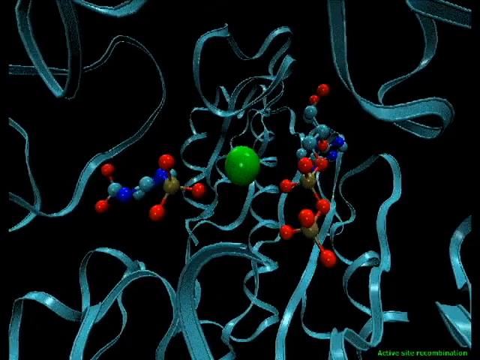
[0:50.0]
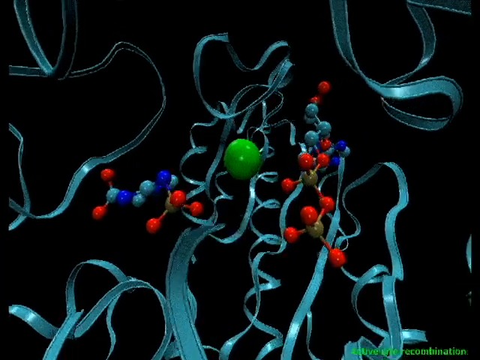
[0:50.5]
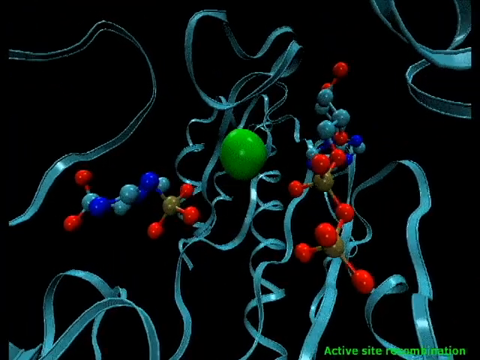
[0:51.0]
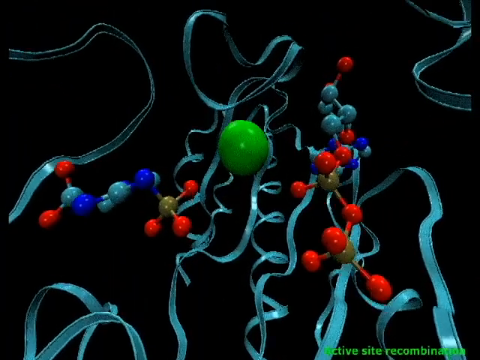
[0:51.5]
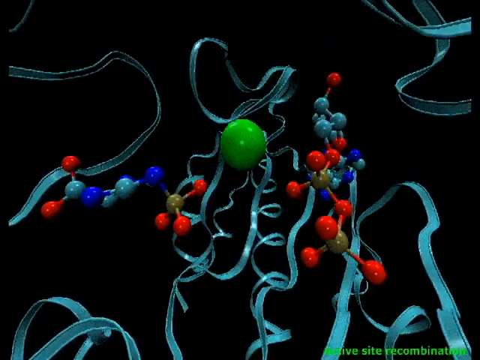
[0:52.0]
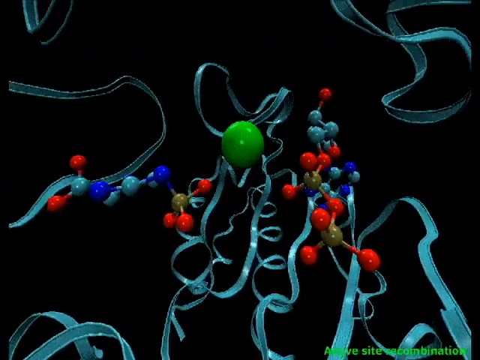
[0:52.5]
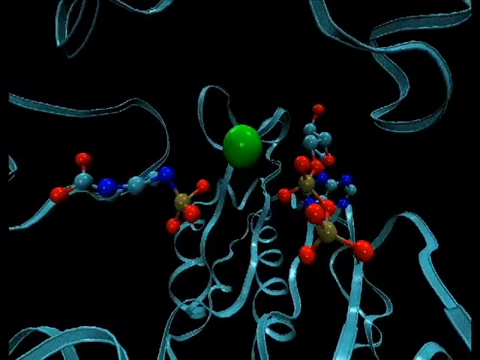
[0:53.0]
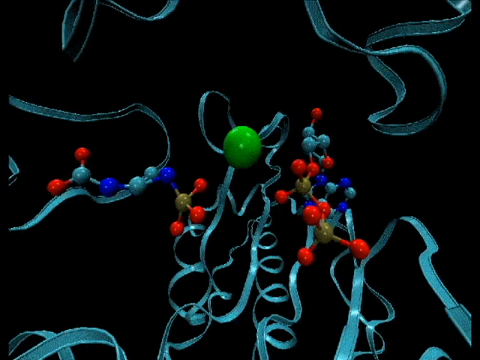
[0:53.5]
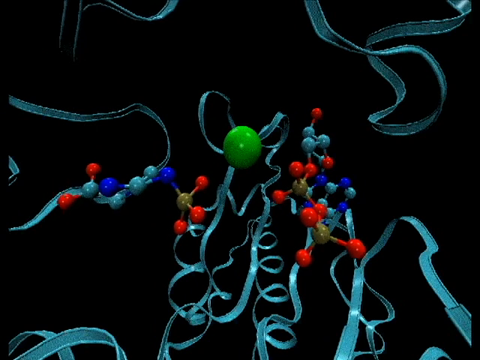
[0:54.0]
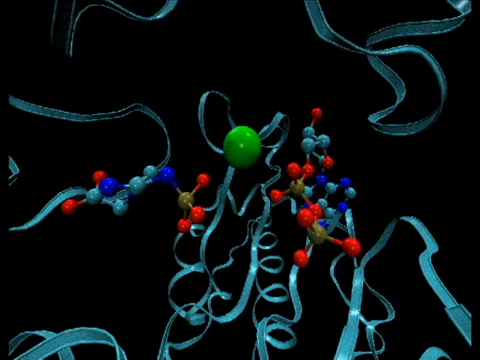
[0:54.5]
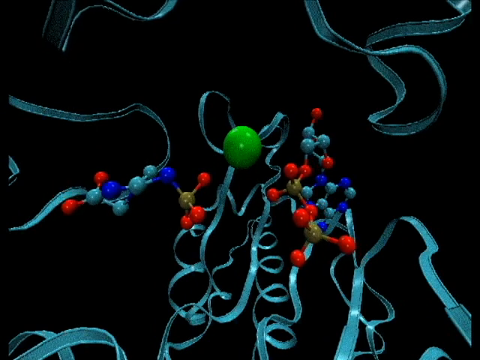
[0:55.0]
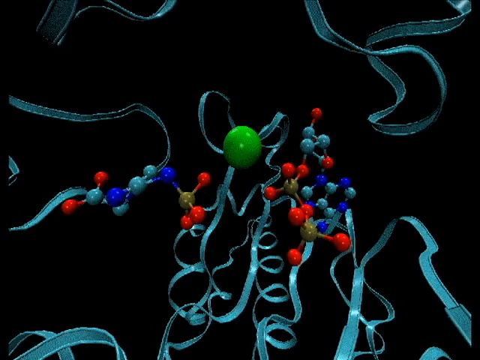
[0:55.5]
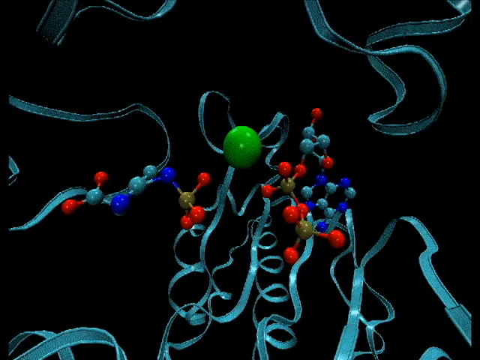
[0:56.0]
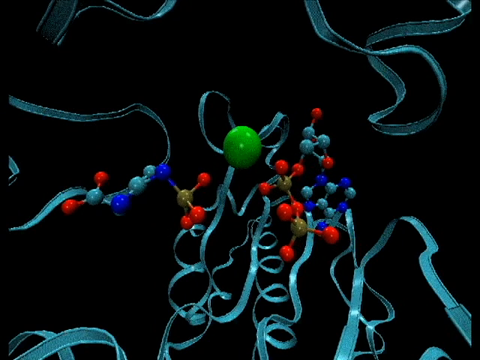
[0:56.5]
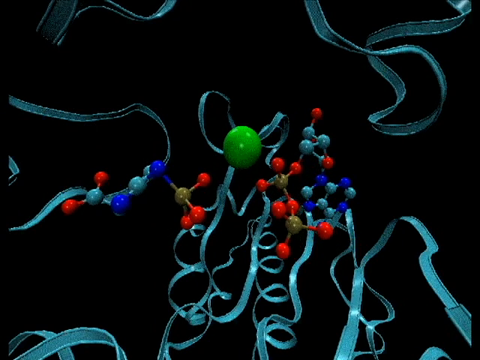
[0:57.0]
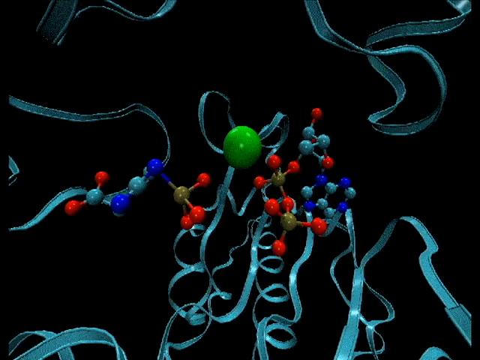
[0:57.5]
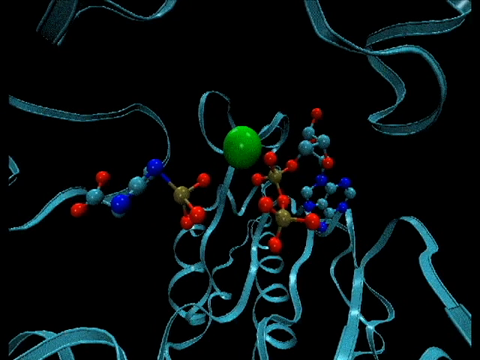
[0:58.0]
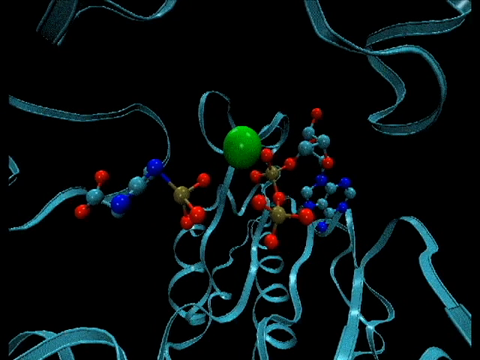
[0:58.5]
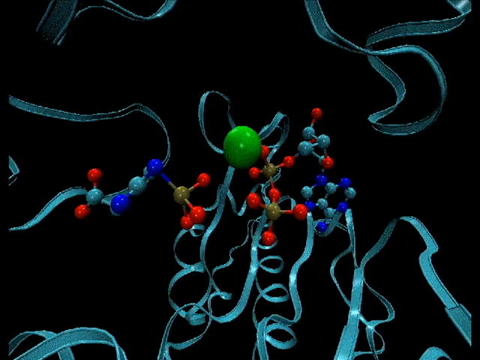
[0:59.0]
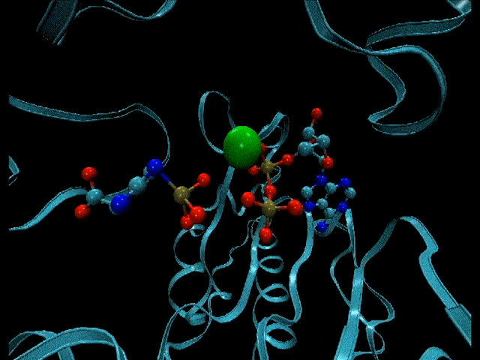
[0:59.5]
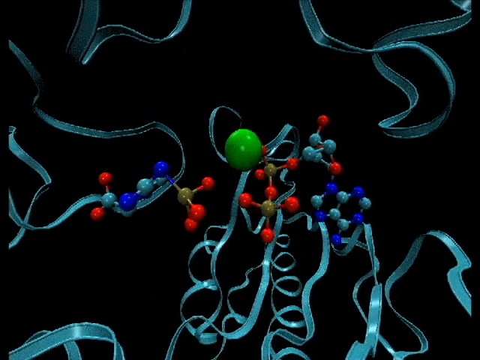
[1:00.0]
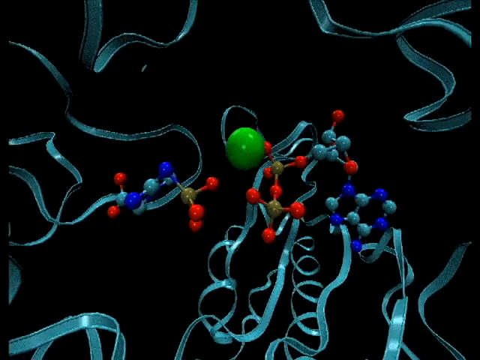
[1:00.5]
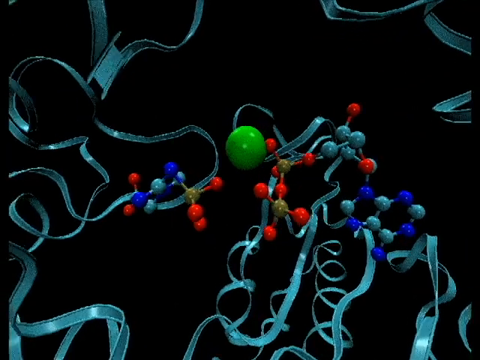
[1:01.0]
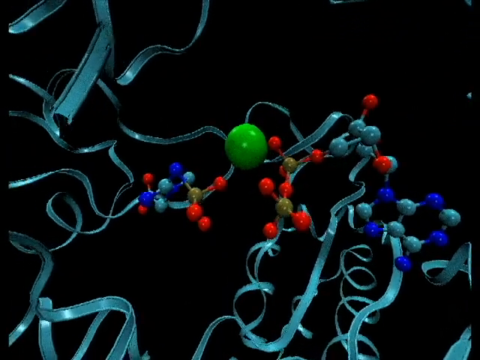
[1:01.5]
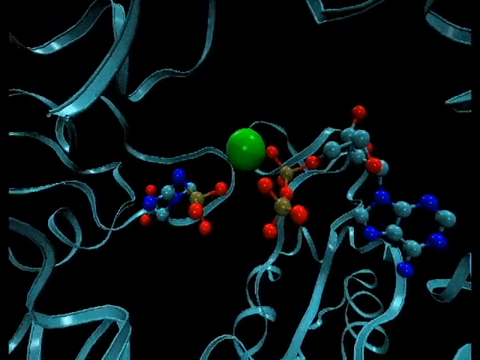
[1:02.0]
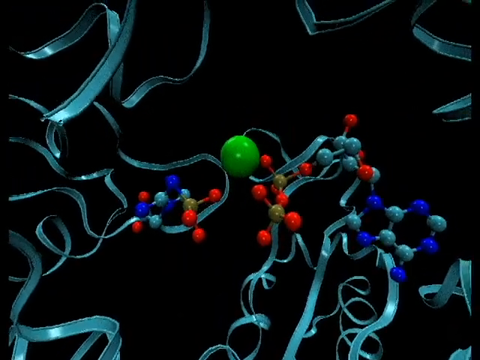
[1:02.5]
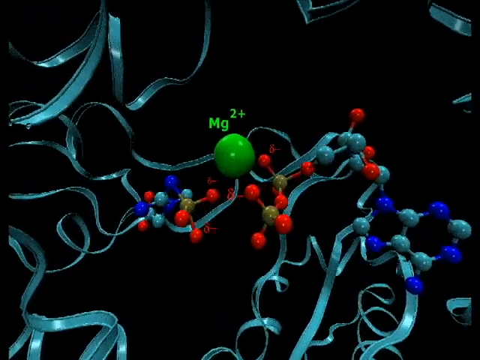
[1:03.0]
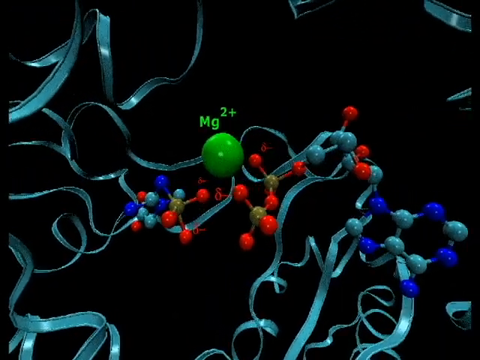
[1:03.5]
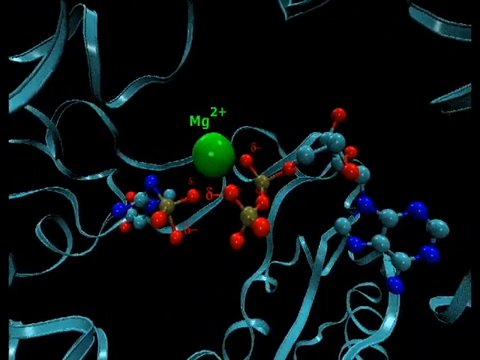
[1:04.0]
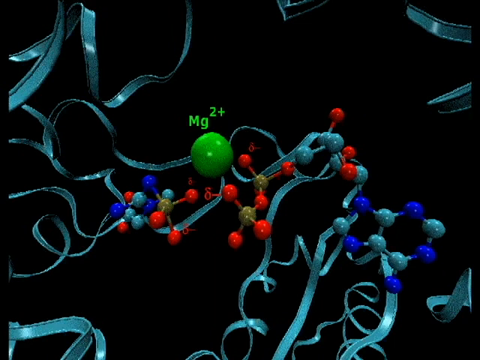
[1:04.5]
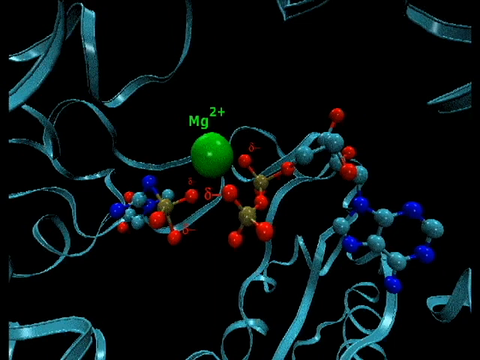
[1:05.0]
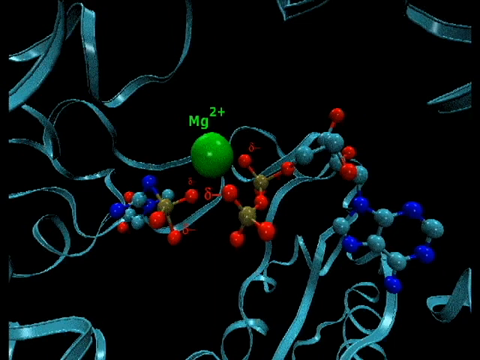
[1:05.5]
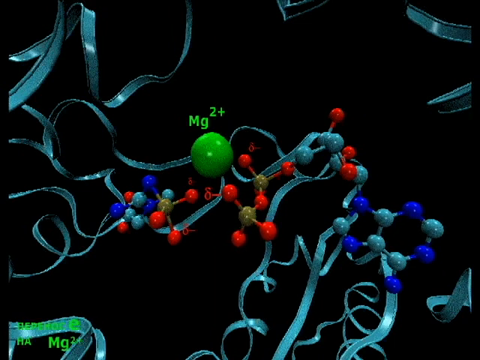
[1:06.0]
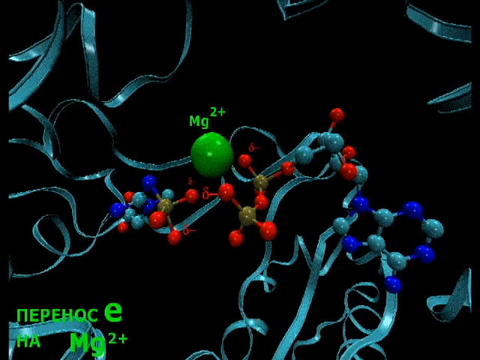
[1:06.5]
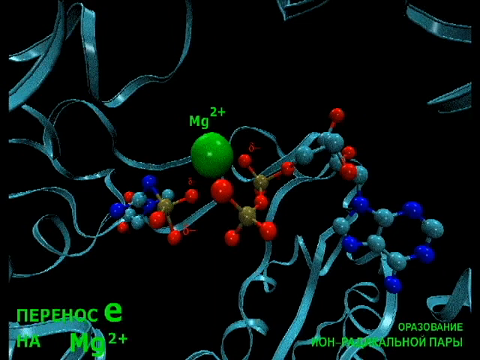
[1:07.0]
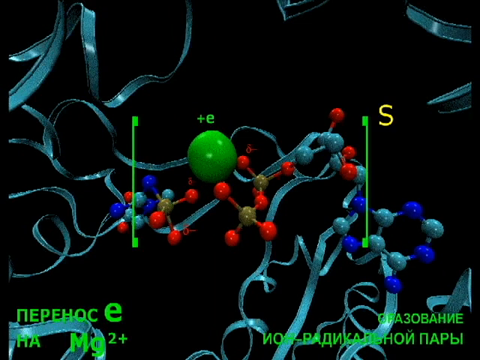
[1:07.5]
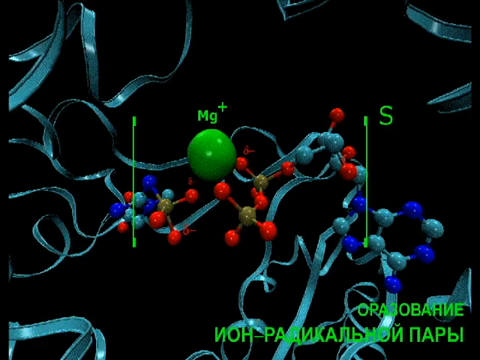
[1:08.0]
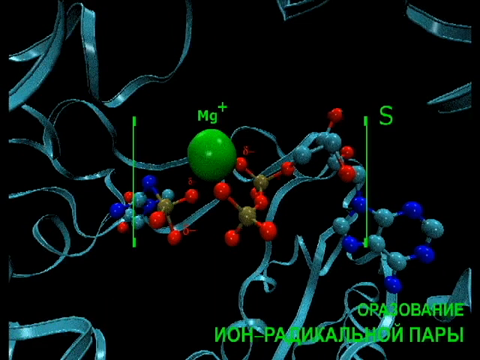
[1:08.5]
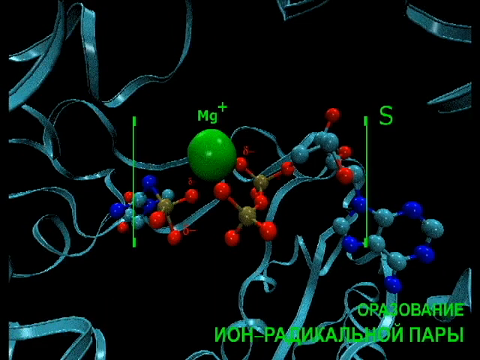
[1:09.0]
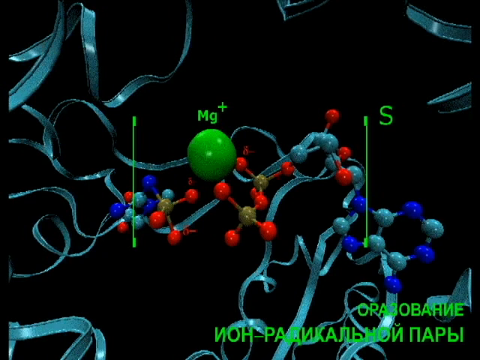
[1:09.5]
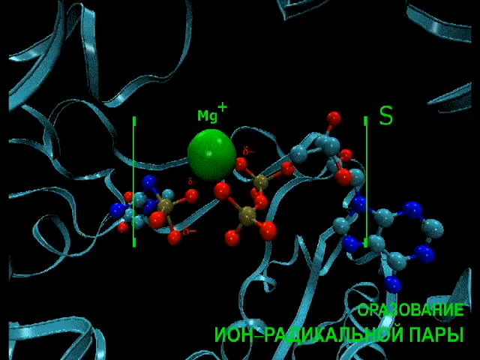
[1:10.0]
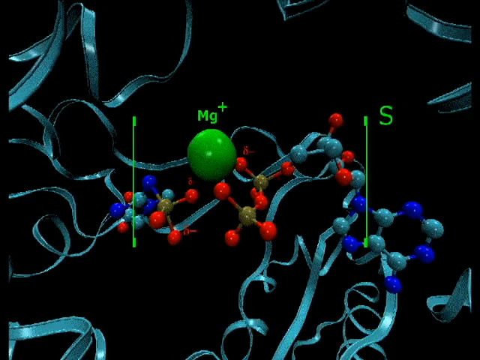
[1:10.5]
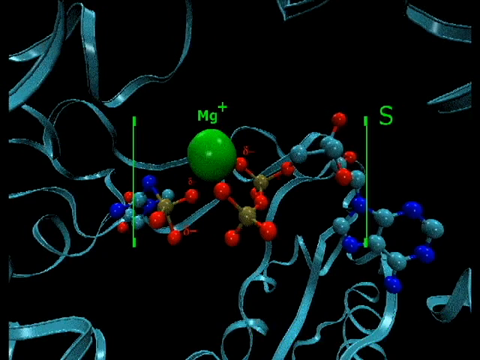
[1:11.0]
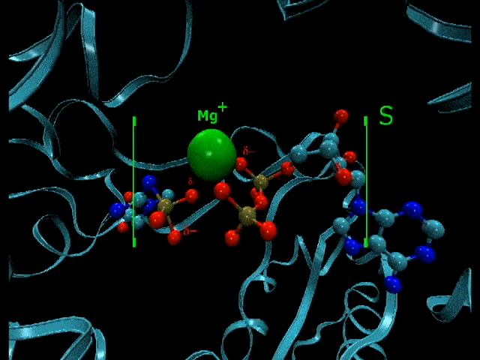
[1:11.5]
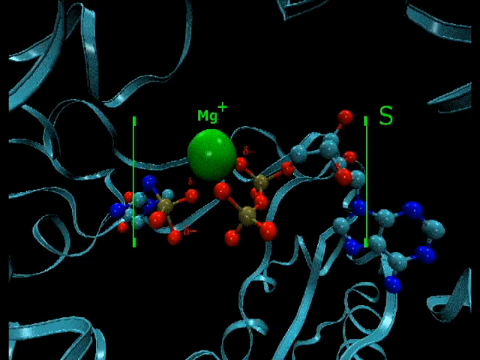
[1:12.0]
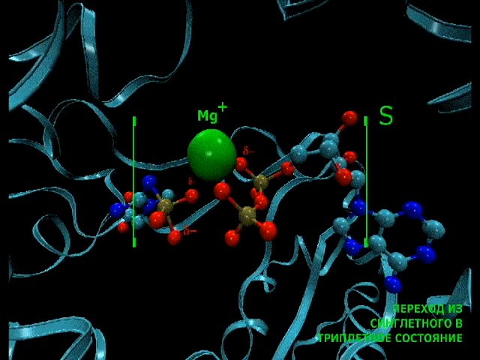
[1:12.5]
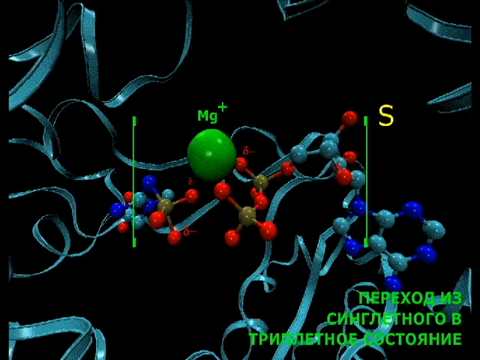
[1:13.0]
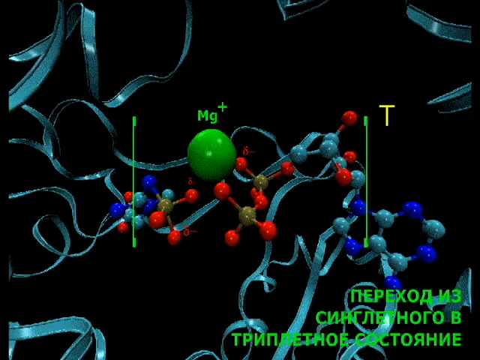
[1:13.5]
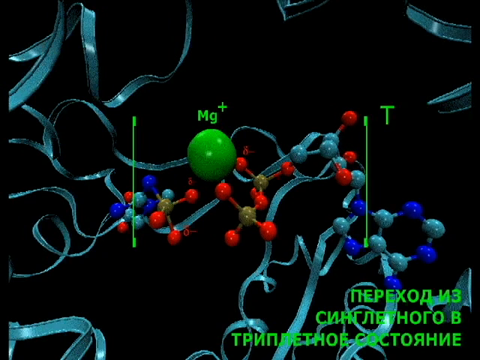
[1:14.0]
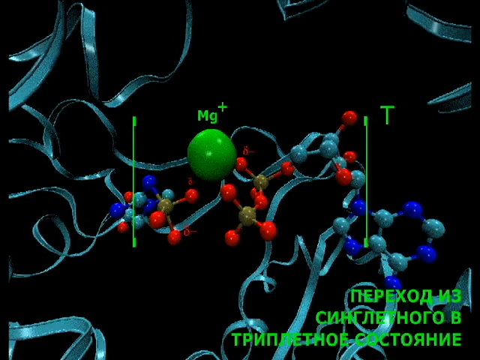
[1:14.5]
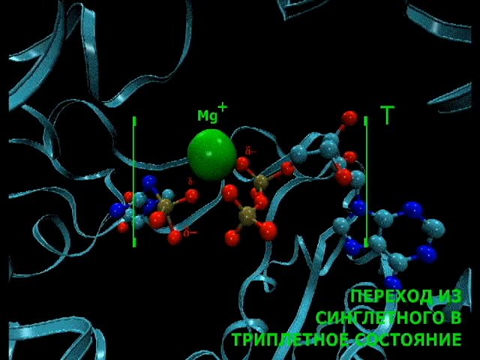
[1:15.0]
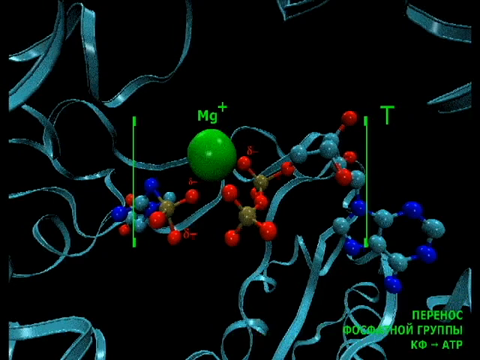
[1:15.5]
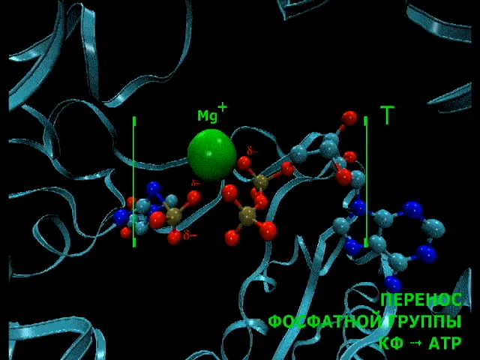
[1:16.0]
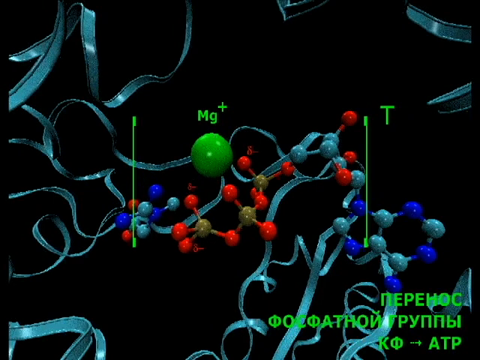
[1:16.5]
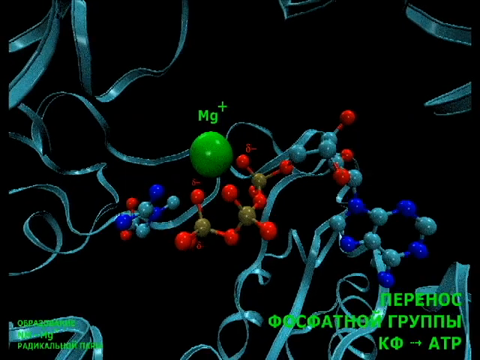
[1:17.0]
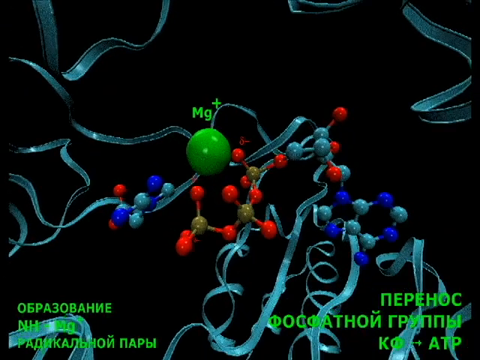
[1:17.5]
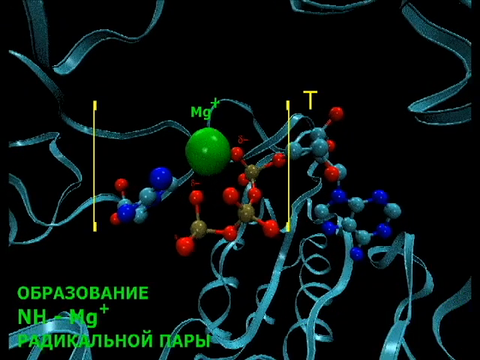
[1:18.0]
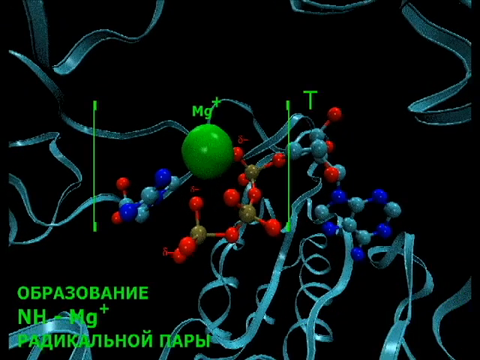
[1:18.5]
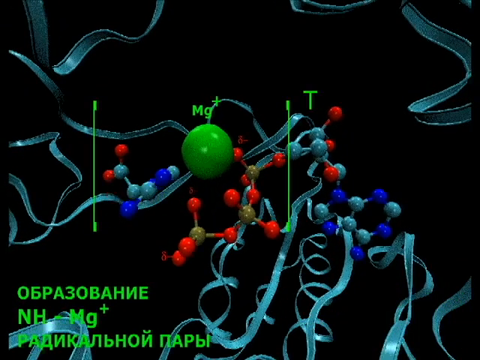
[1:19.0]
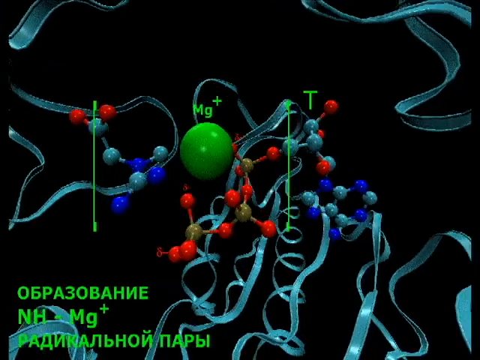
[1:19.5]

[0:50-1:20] A computer-created 3D representation shows the molecular structure of three molecules: the biggest, a protein, creatine kinase; ADP; and creatine phosphate. The camera is zoomed in on the central bonding site for the magnesium, quite deep inside the three-dimensional structure of the protein. From various angles it shows the other two molecules and the magnesium ion, which is initially labelled as Mg+. The magnesium ion is then labelled as Mg2+ as the reaction and bonding between the protein and the other two molecules takes place. Various text labels appear on the screen as annotations in the Cyrillic alphabet. The camera continues to show the bonding site from many different angles and zoom levels. Each of the molecules' individual atoms is also labelled. The bonding molecules are made up of atoms that are red, brown, blue, or lighter blue, indicating the element and apparently also the charge.